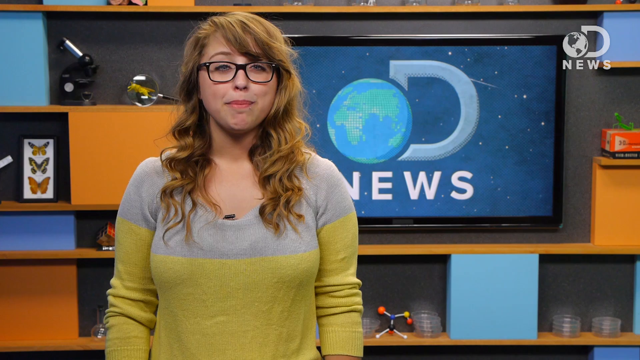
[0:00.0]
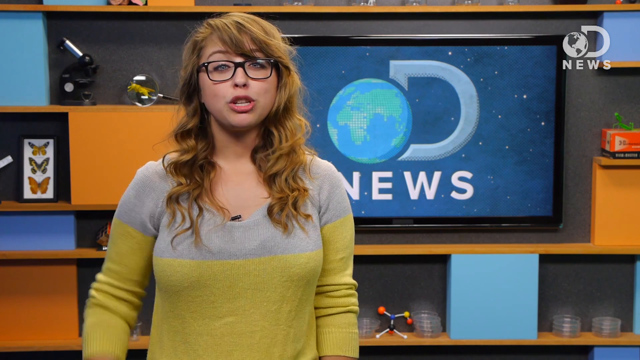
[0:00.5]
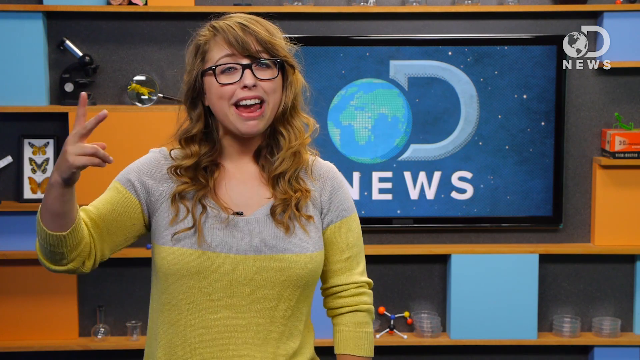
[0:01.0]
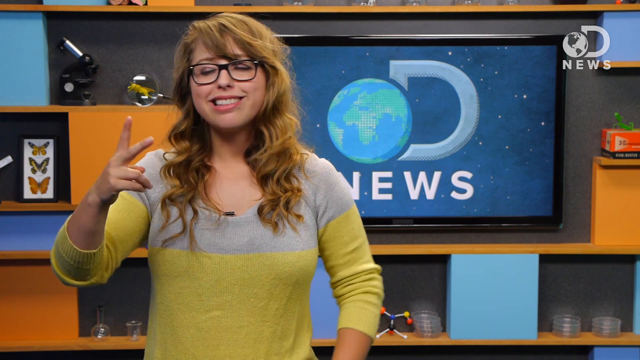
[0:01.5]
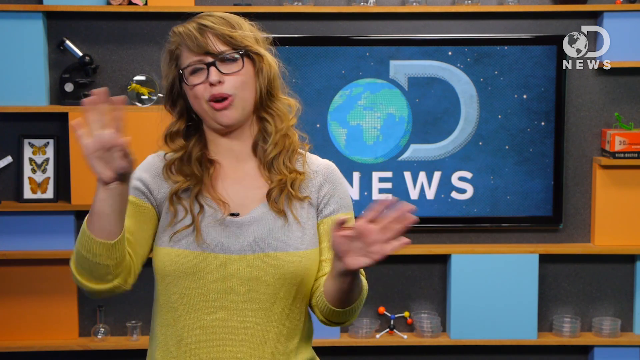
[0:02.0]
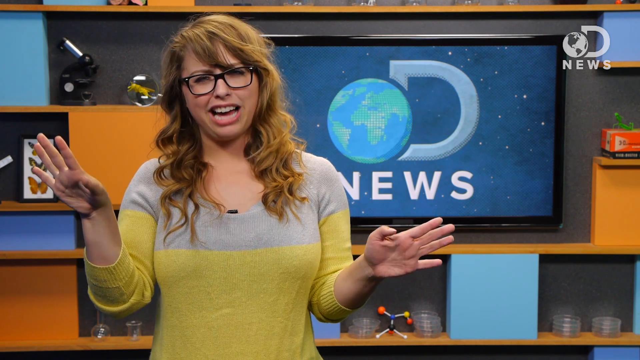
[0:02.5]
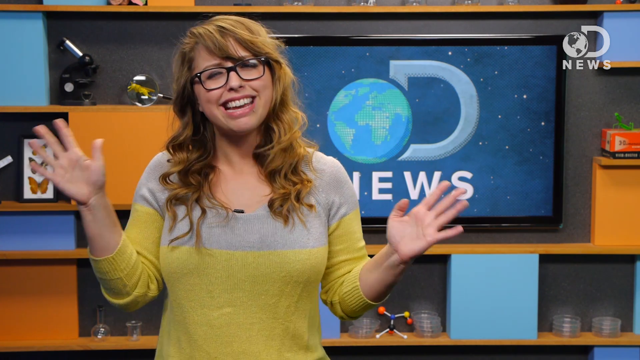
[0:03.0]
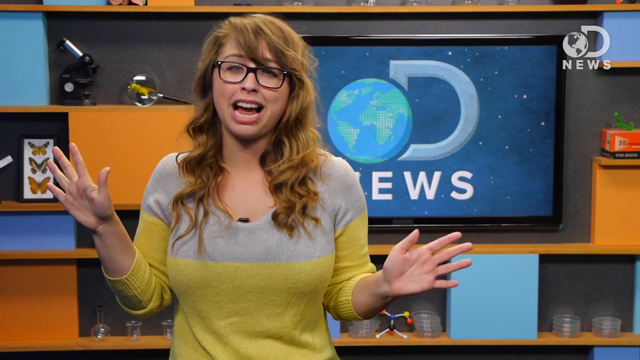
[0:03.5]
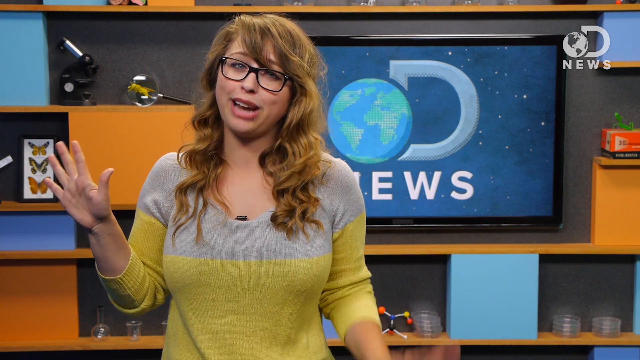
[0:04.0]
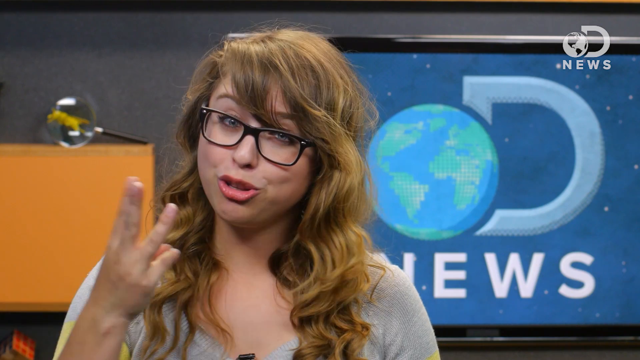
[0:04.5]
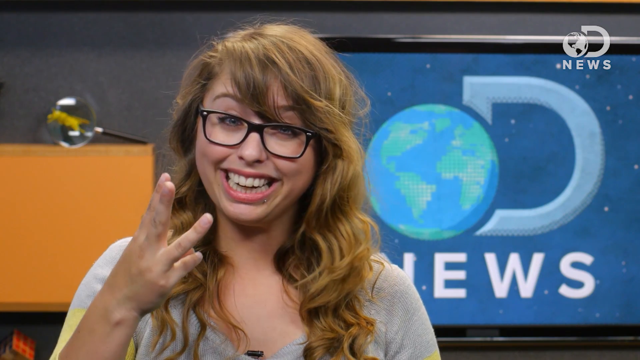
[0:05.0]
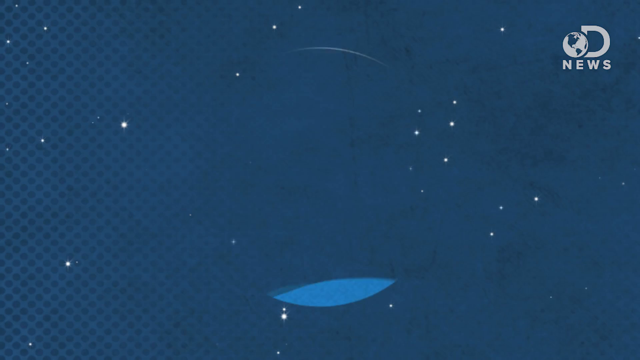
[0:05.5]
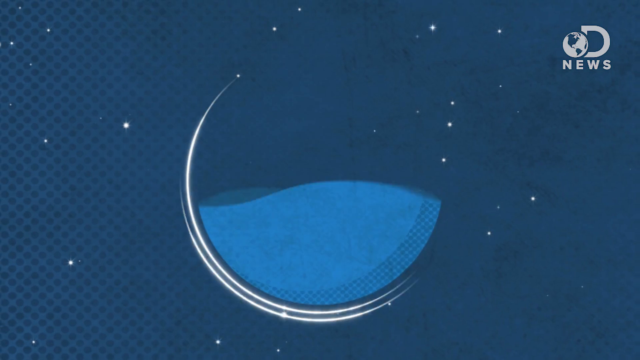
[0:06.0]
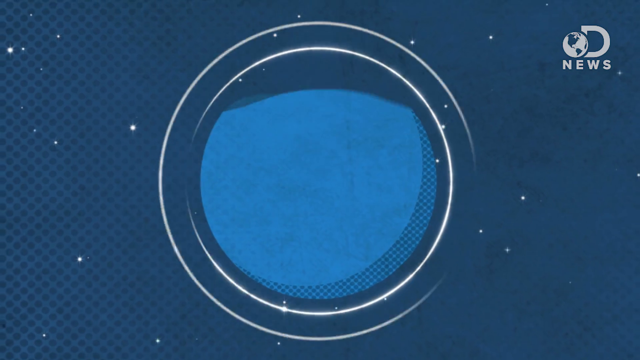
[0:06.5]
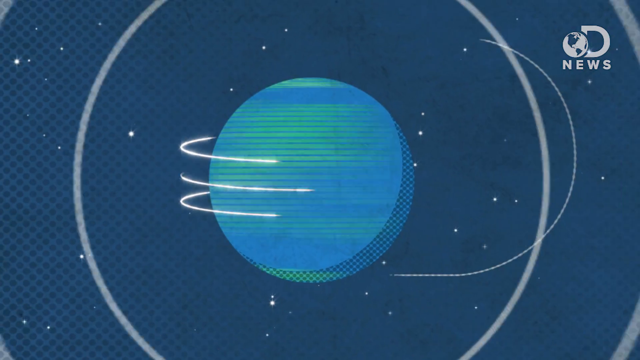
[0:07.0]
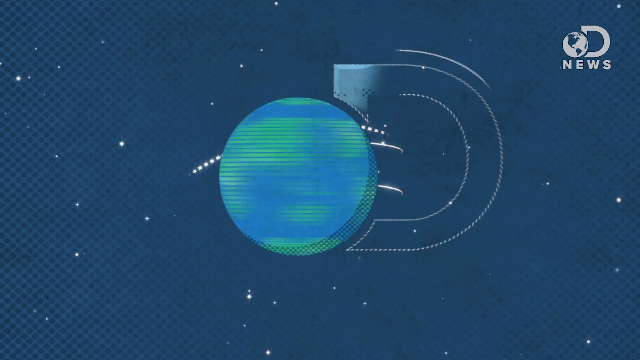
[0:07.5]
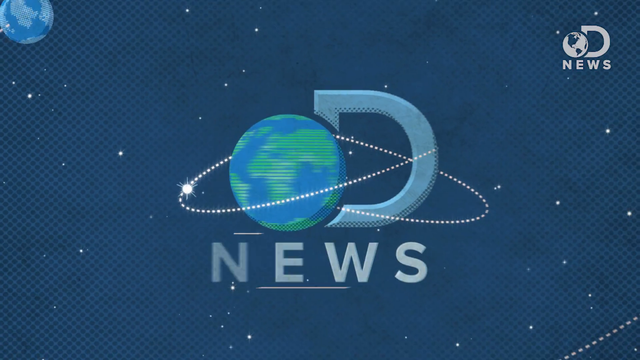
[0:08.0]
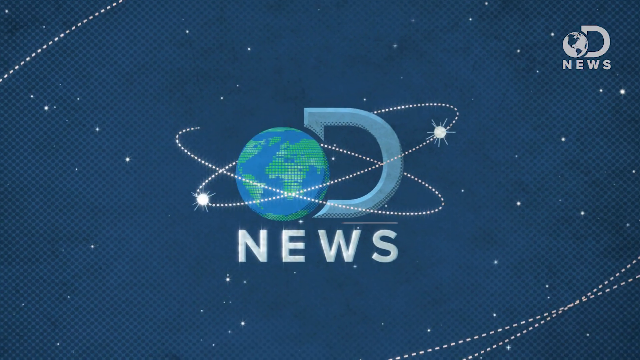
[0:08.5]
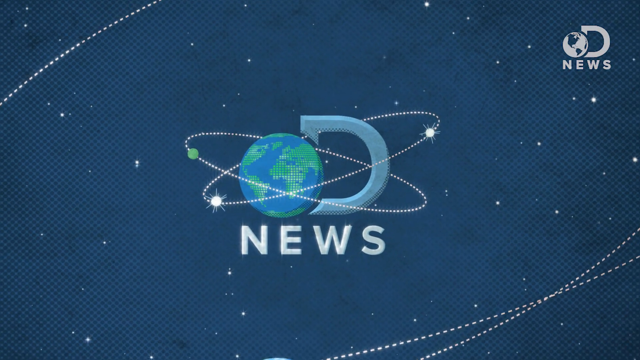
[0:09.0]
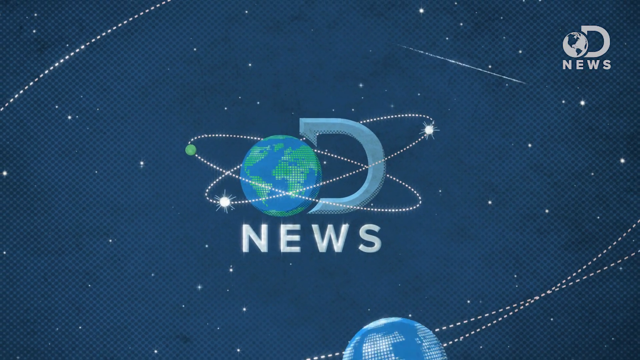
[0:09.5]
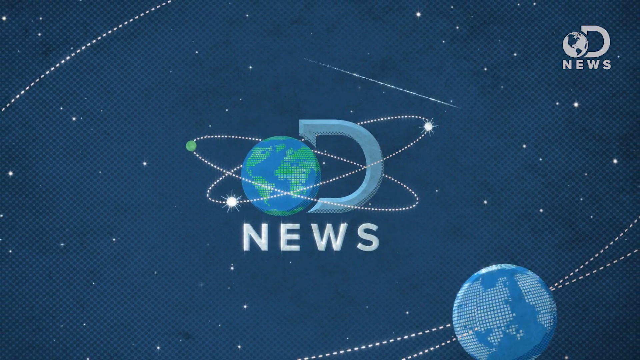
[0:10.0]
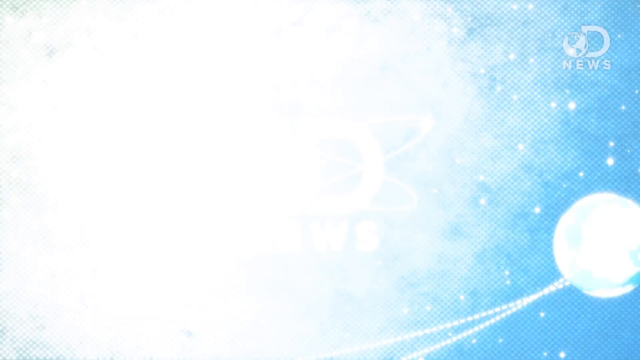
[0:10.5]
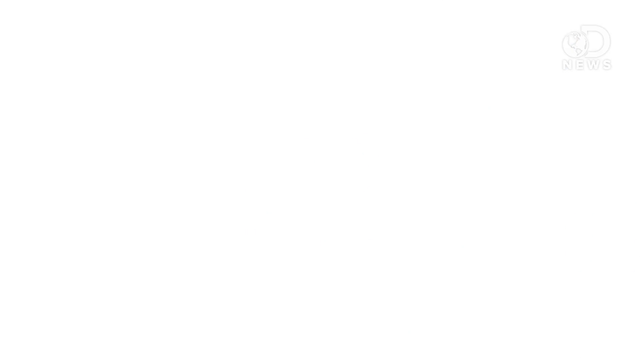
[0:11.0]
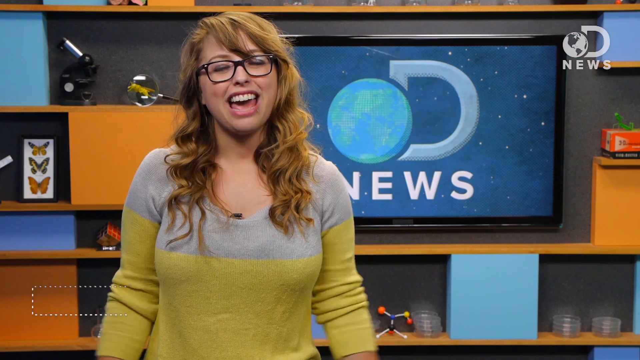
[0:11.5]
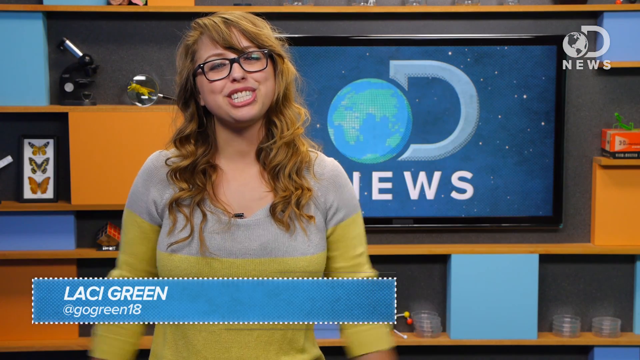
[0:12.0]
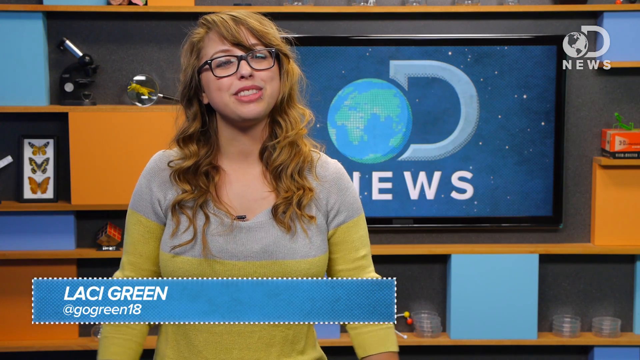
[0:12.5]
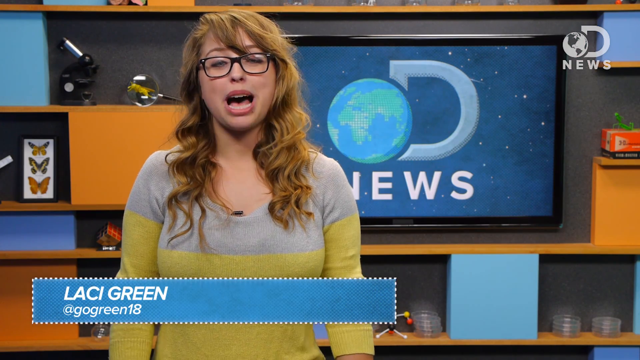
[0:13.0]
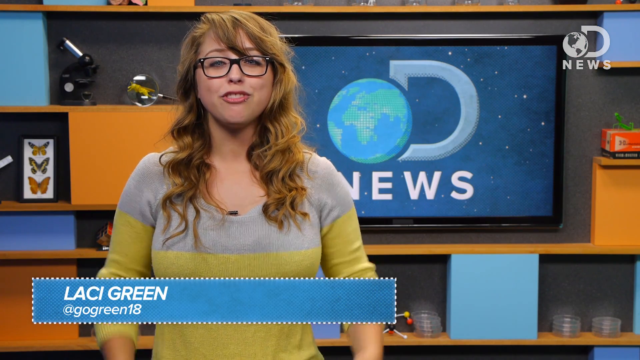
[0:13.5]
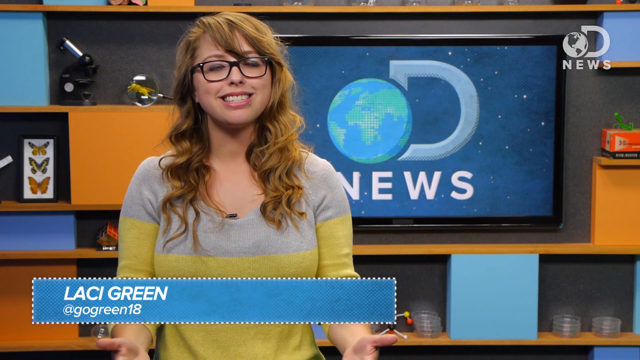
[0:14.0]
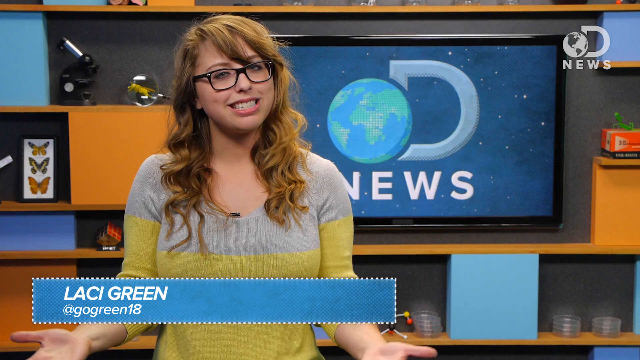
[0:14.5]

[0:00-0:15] The video opens with the title "How a Baby Can Have Three Biological Parents," and it appears to be from OD News: a logo shows an earth as the "O," followed by a "D," with "news" underneath. A woman reporter wears a gray and green sweater and glasses, and has honey-blonde hair past shoulder length. Her background appears to be a classroom, possibly a scientific lab, with butterflies, a microscope and a blackboard. She starts to talk, holding up two fingers and then three fingers. The newscast opening follows with the OD News logo and something like a neuron, and then her name appears: Lacey Green, a scientist, along with the text "at G Green 8," apparently her social tags.